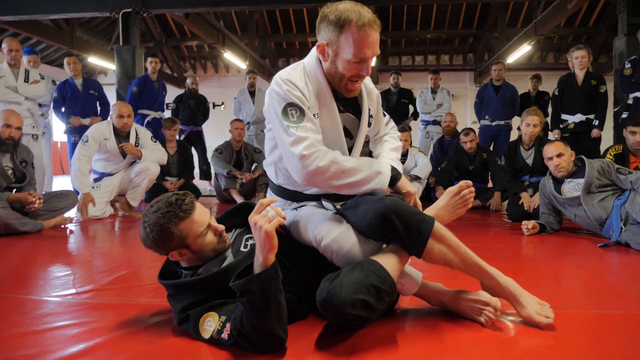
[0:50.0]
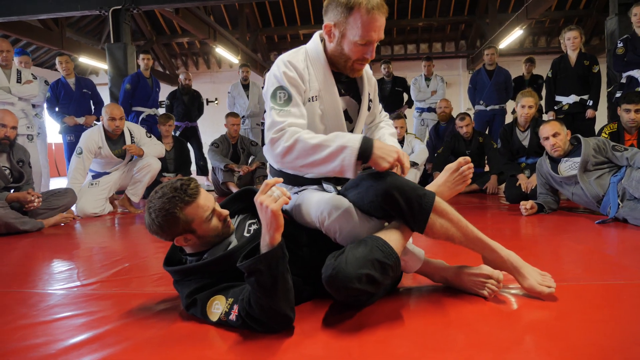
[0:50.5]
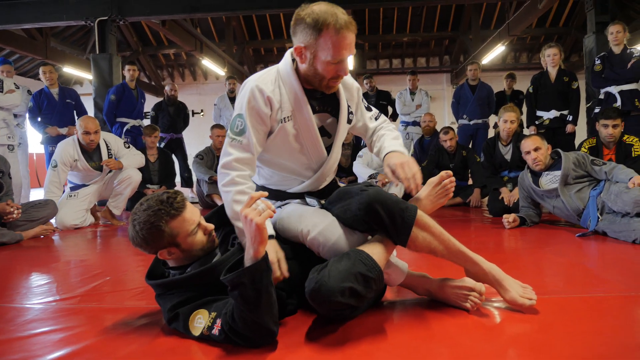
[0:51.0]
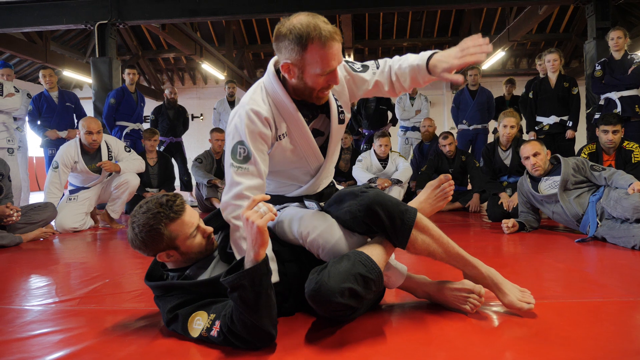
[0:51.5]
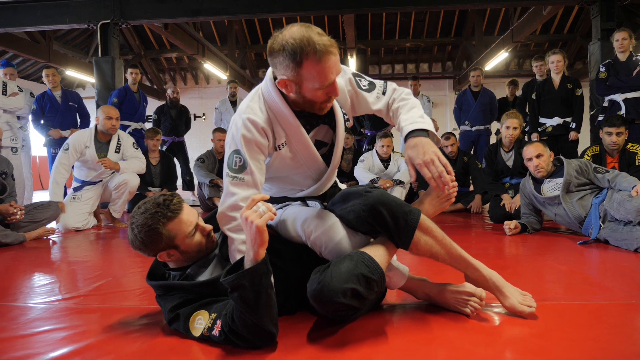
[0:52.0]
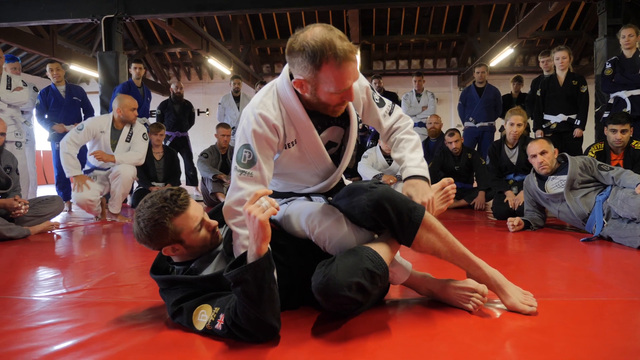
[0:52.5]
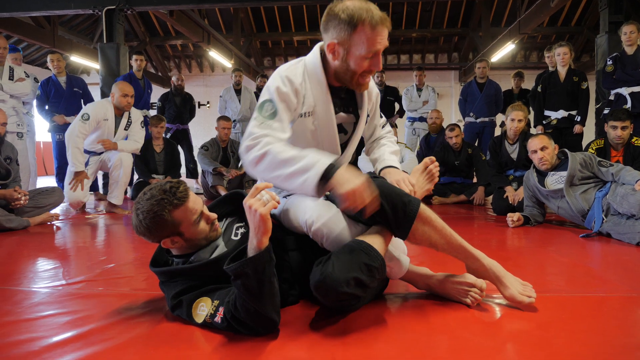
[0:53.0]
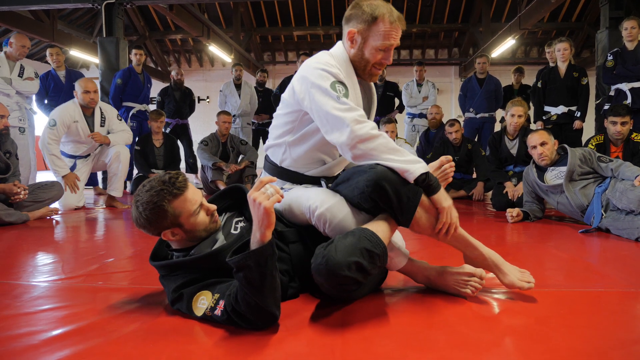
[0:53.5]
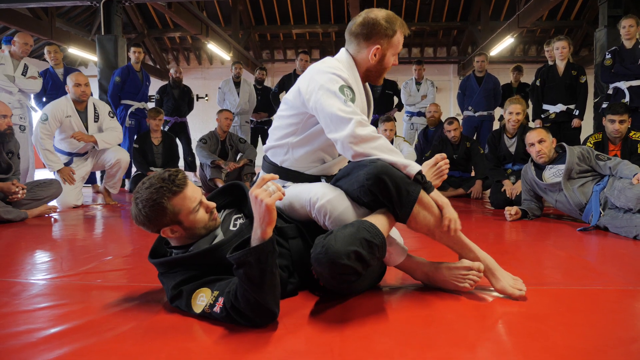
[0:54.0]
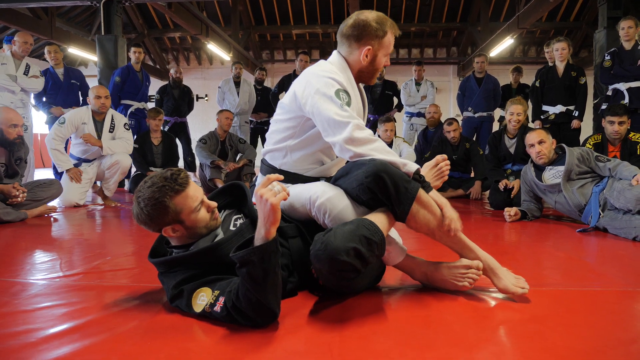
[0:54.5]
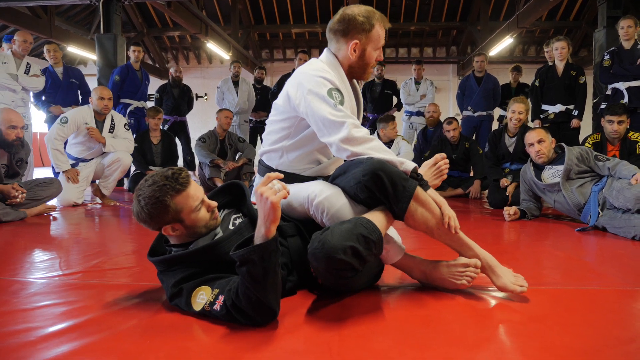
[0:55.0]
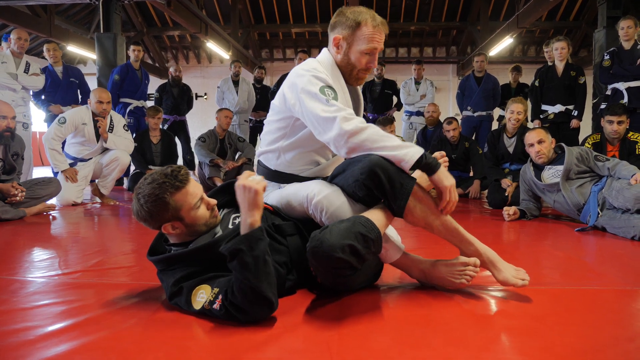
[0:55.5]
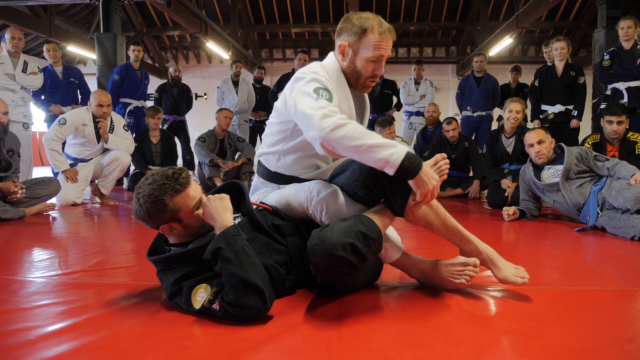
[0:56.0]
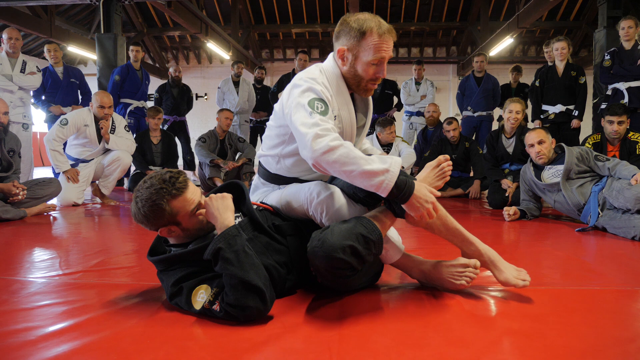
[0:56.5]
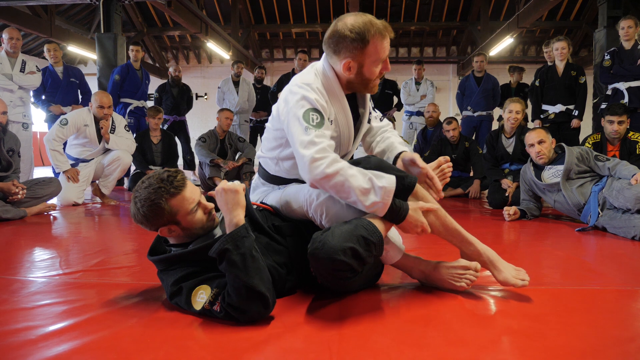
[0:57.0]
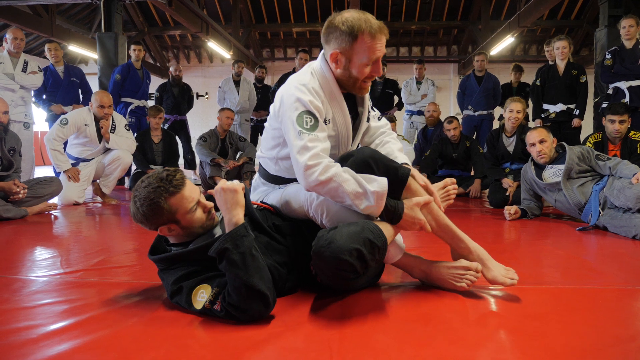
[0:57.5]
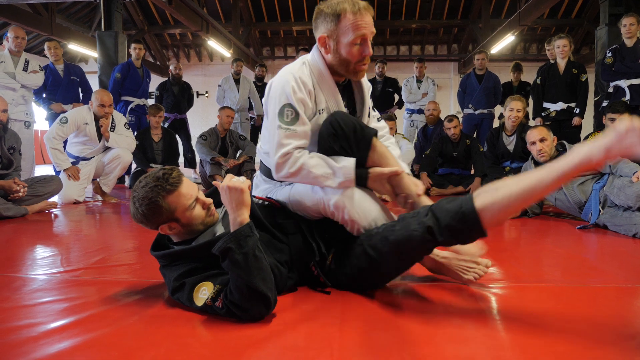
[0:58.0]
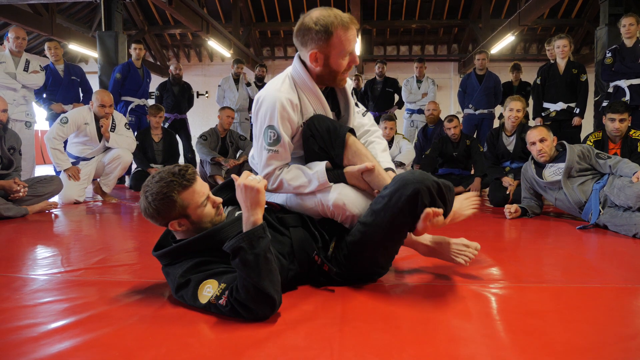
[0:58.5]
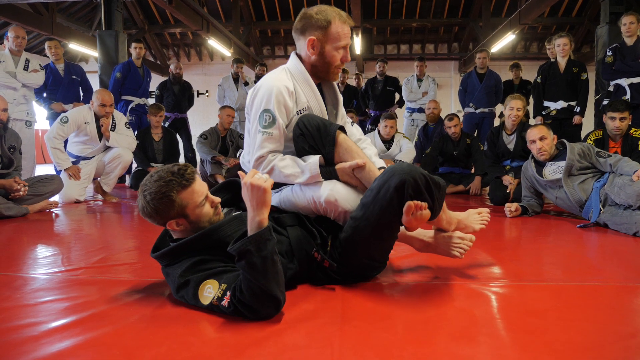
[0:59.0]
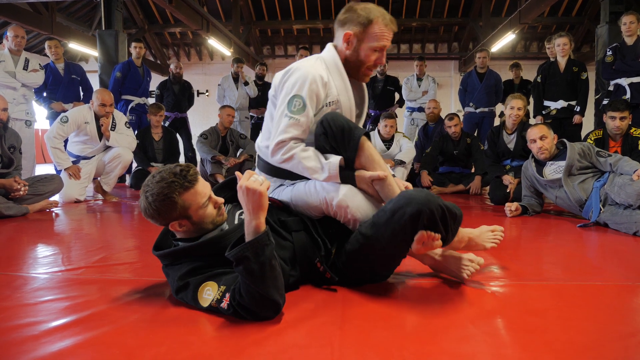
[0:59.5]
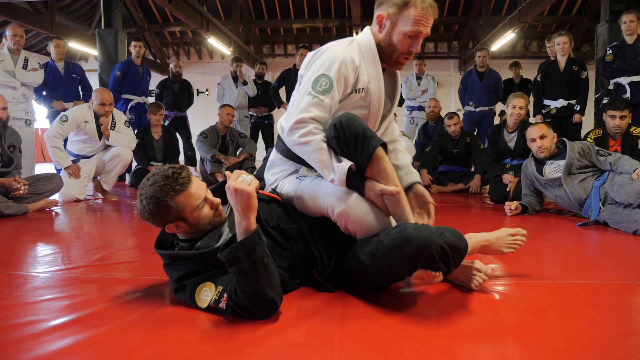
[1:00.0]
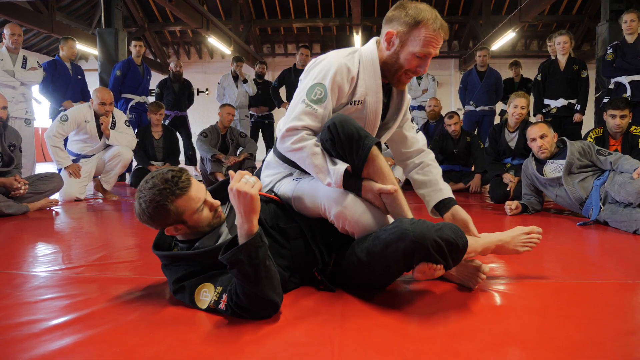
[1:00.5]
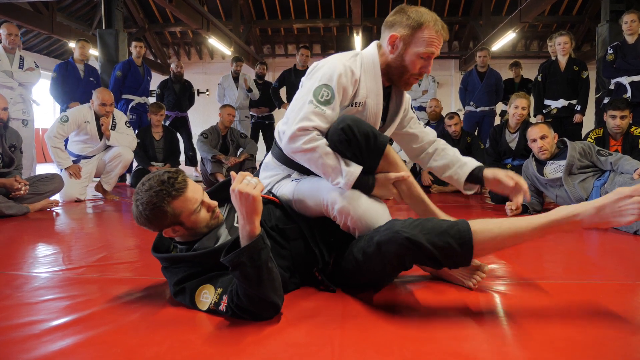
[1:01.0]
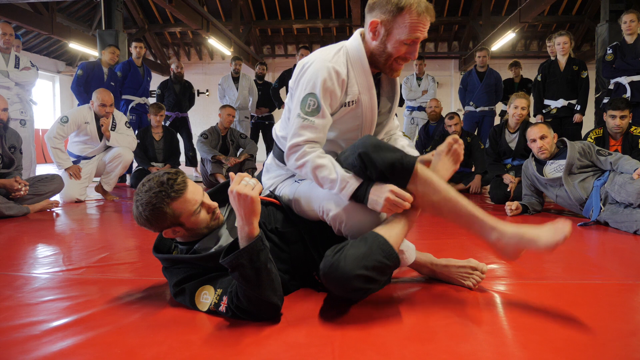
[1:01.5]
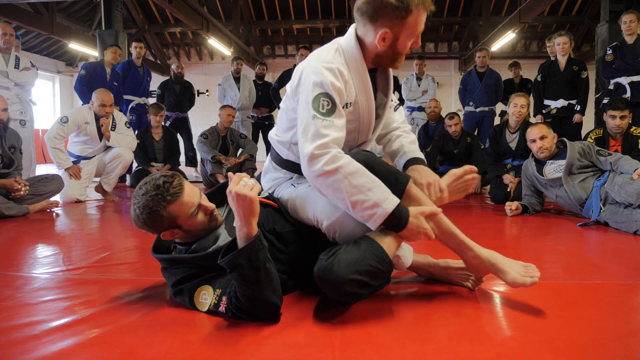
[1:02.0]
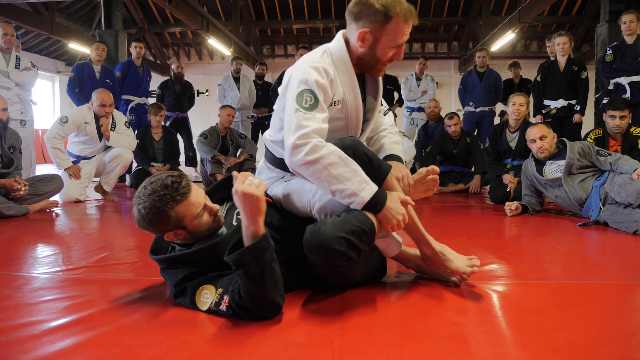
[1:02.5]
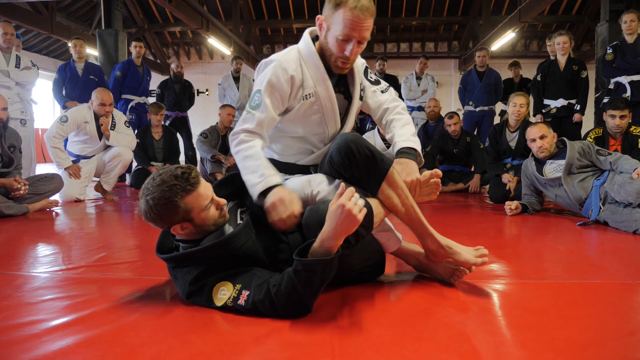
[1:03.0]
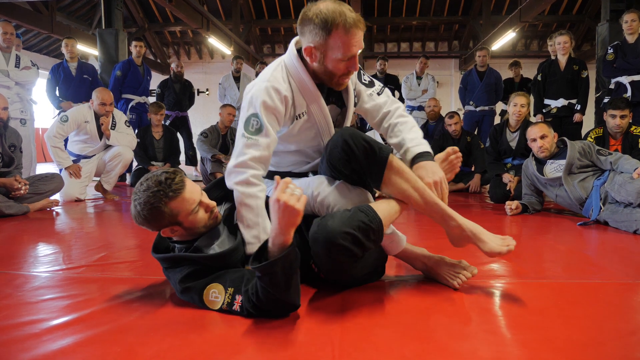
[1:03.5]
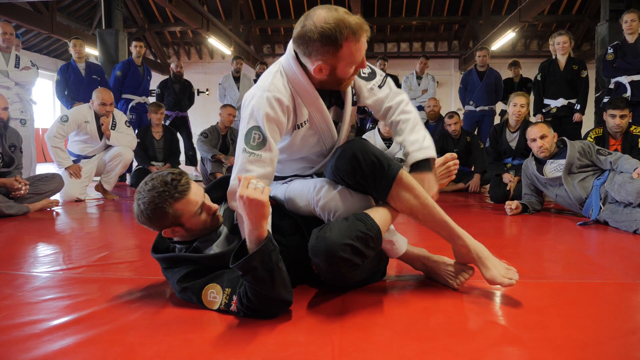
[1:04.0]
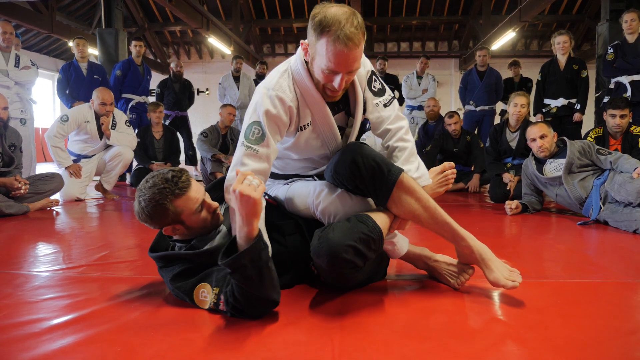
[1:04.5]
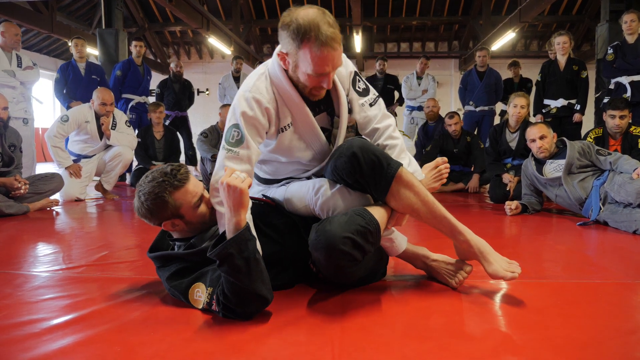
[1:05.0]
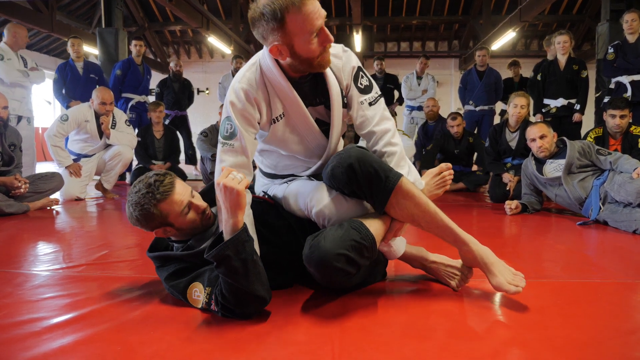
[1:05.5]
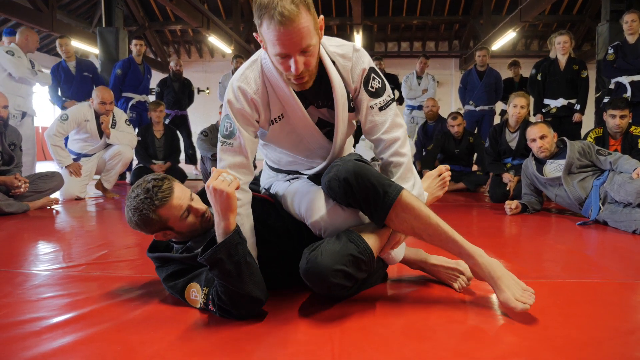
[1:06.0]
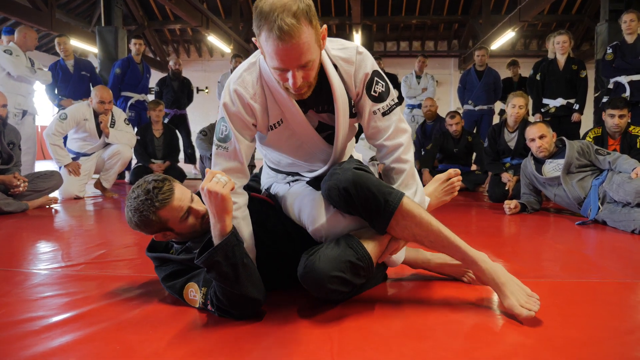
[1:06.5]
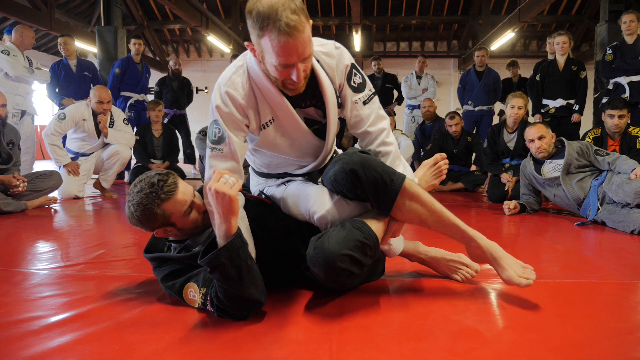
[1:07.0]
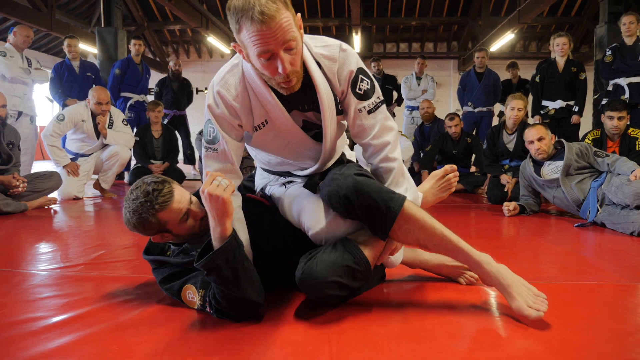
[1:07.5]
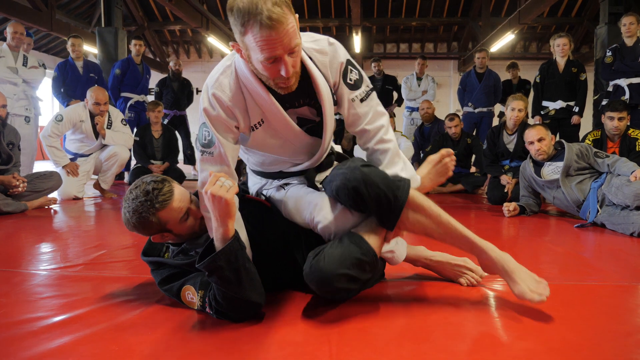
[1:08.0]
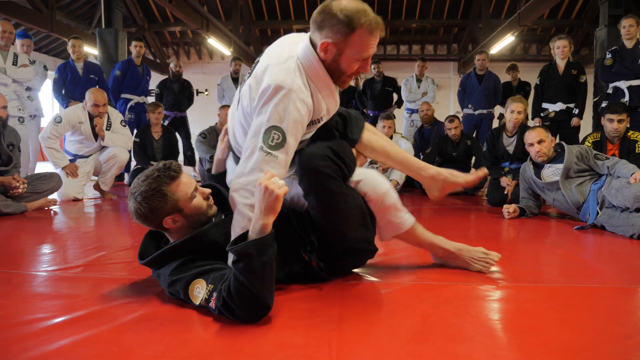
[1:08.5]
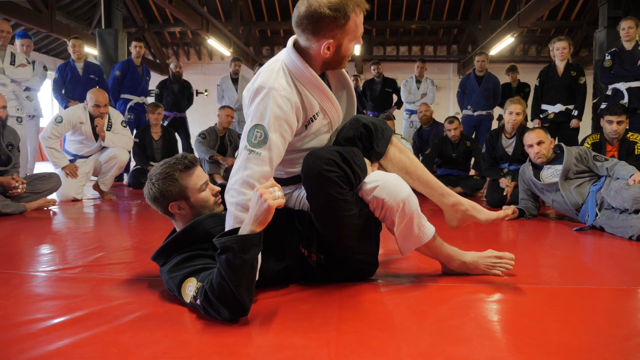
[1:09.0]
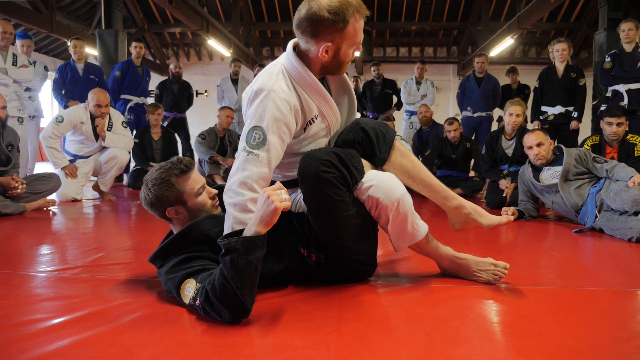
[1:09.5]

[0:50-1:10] The legs remain locked around the right leg of the man in white as he kind of sits on the man on the bottom. He points to the man's left leg and holds his calf. The man on the bottom lets go of the lock for a second and locks his right leg around his left foot, but it does not actually lock in, and he goes back to the original position with his left leg locked over his right. The man in white on top apparently tries to show that this is a tighter lock; he tries to move but cannot really move. The whole time he keeps looking back at the class, apparently leading them through it. The people in the back sit cross-legged, kind of lie on an elbow, or kind of kneel, and all of their attention is on the leg lock and the instructor in the middle of the room; none of them look away.